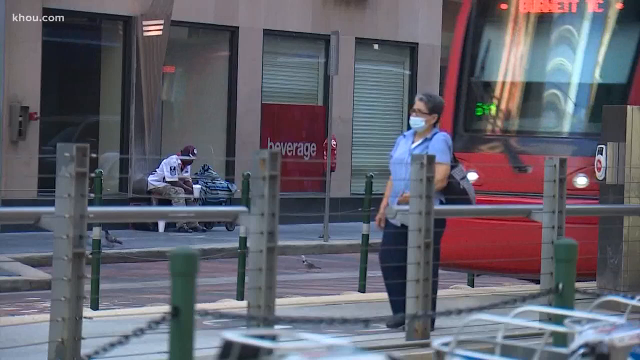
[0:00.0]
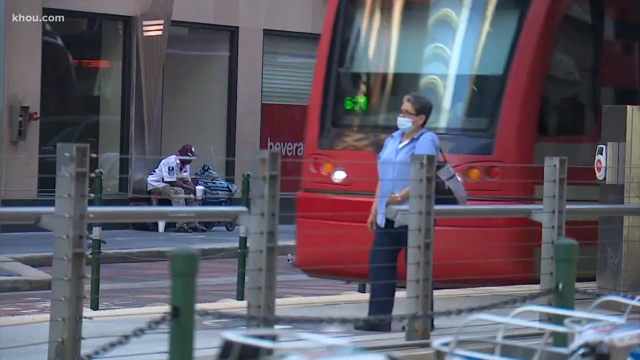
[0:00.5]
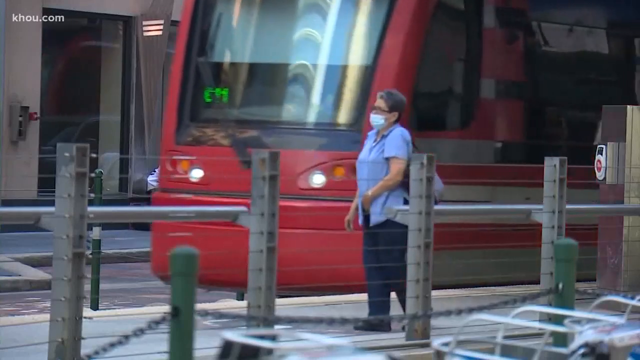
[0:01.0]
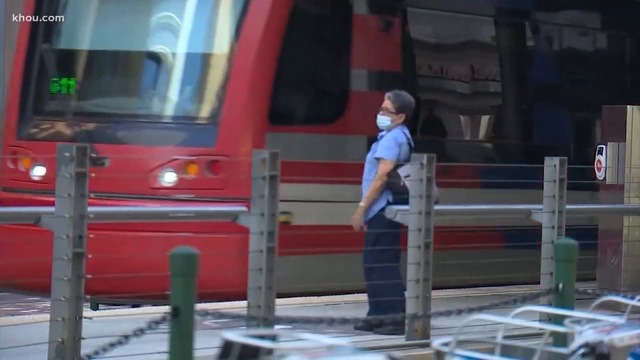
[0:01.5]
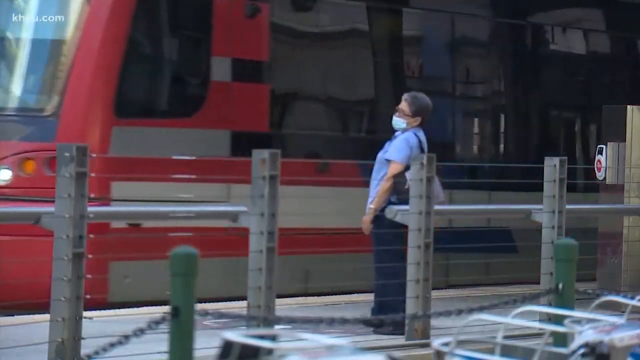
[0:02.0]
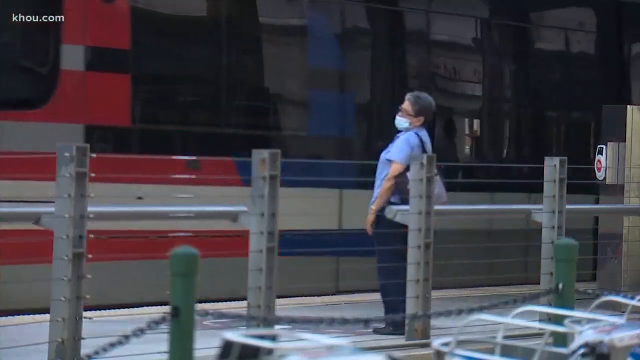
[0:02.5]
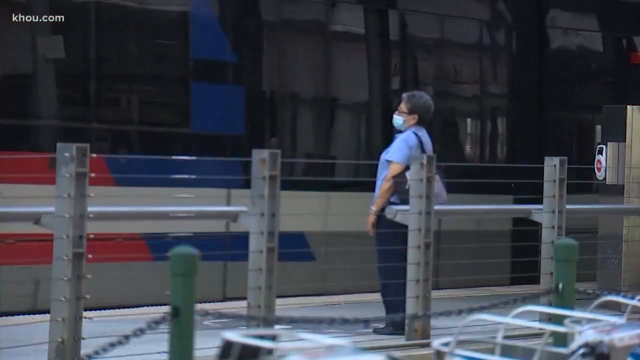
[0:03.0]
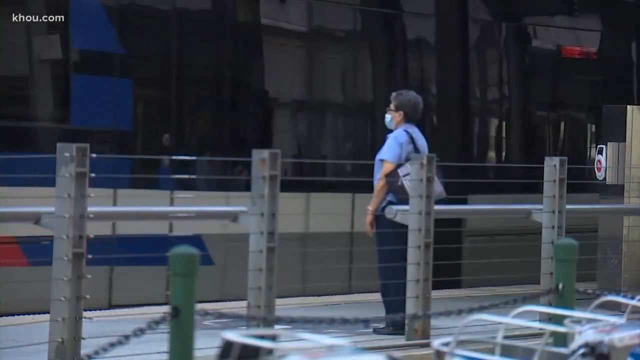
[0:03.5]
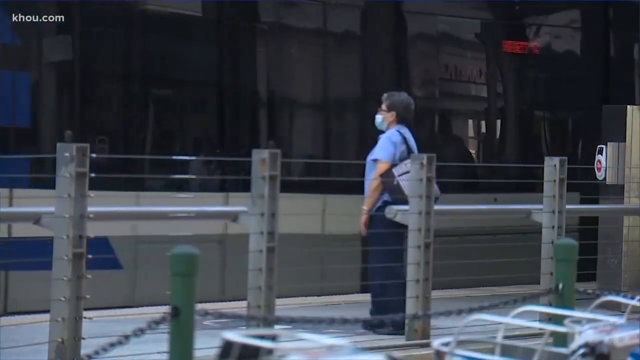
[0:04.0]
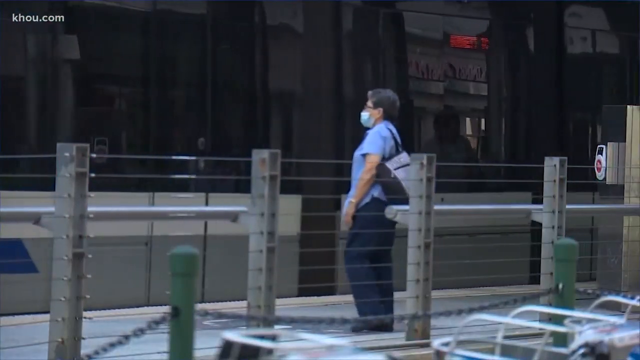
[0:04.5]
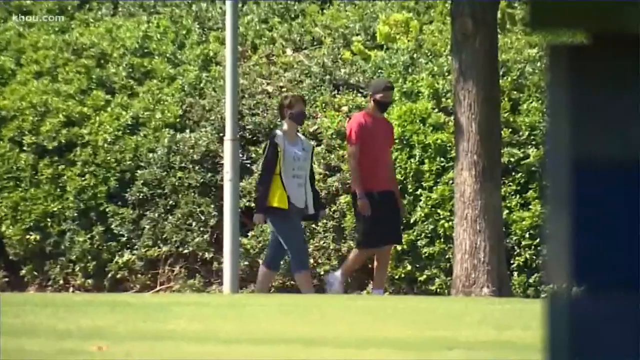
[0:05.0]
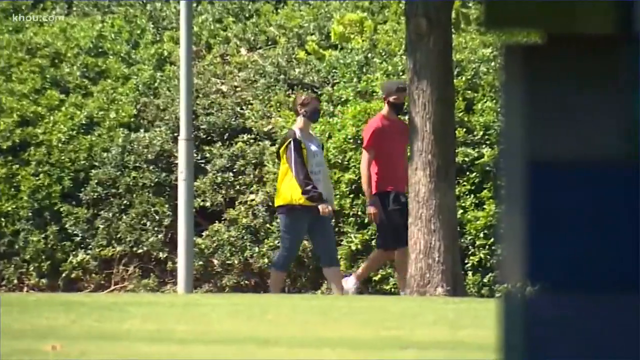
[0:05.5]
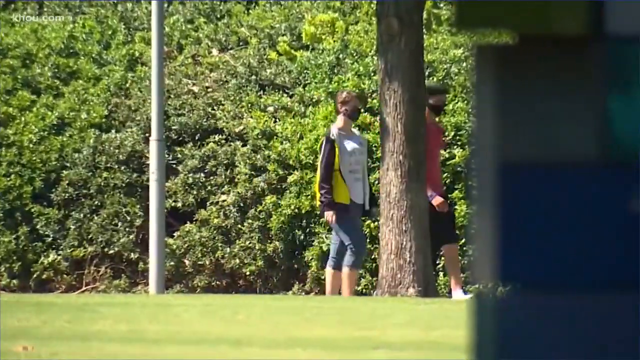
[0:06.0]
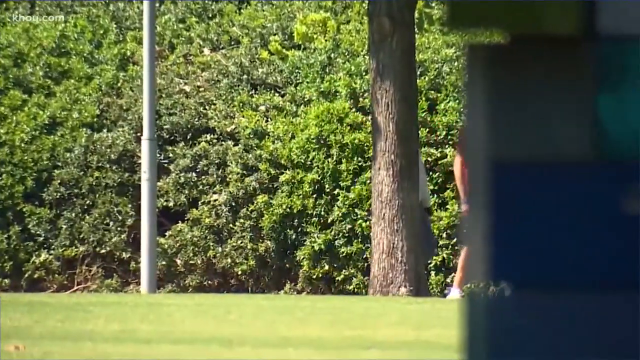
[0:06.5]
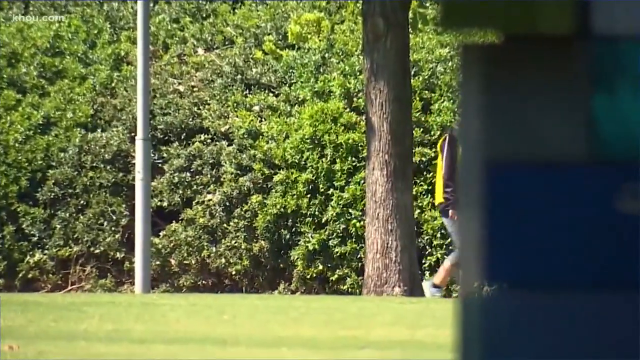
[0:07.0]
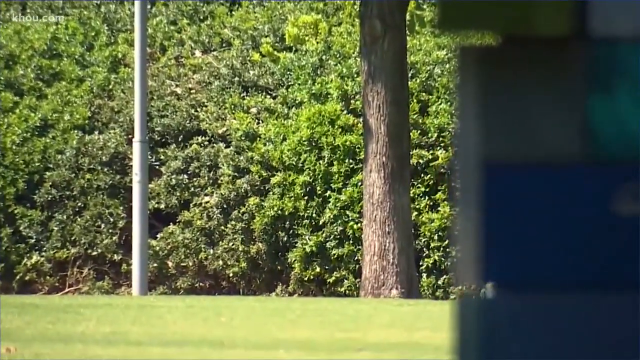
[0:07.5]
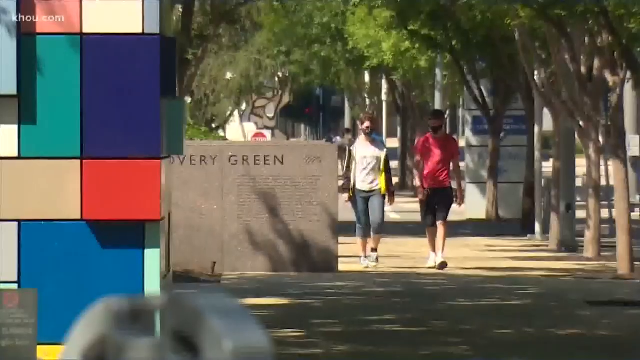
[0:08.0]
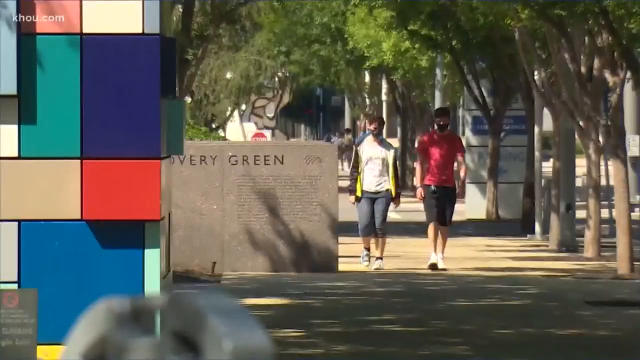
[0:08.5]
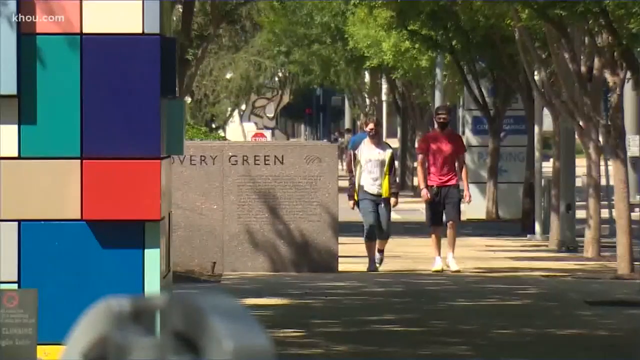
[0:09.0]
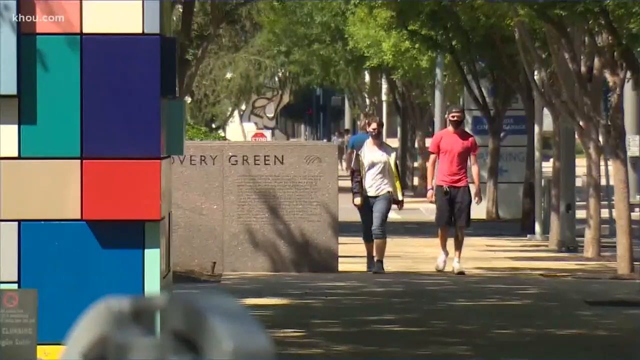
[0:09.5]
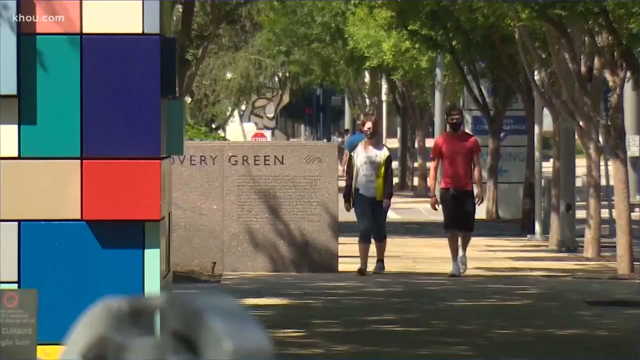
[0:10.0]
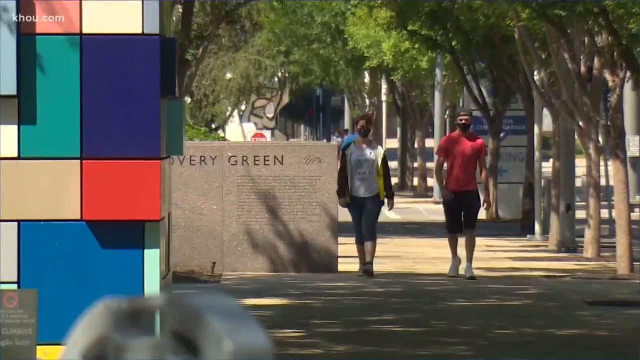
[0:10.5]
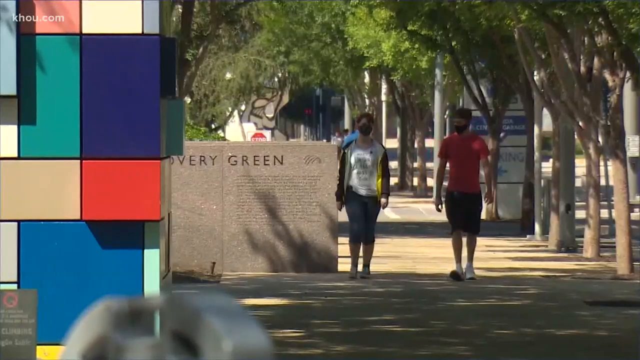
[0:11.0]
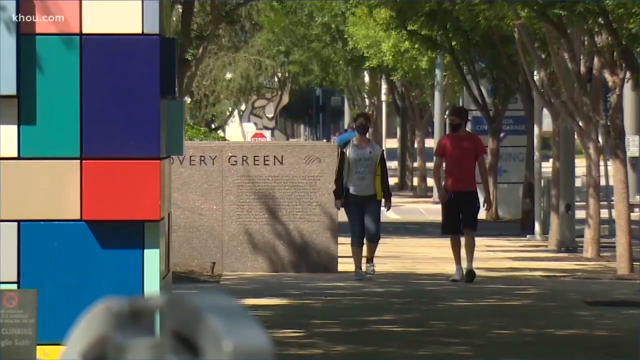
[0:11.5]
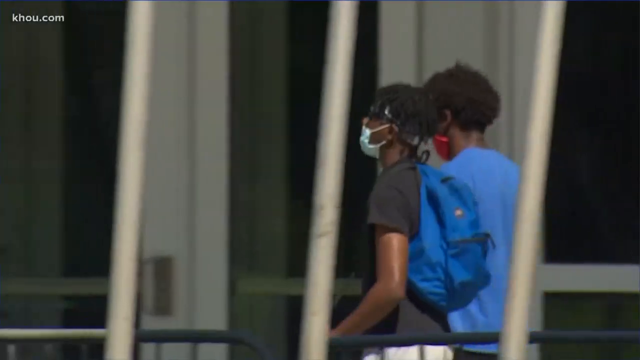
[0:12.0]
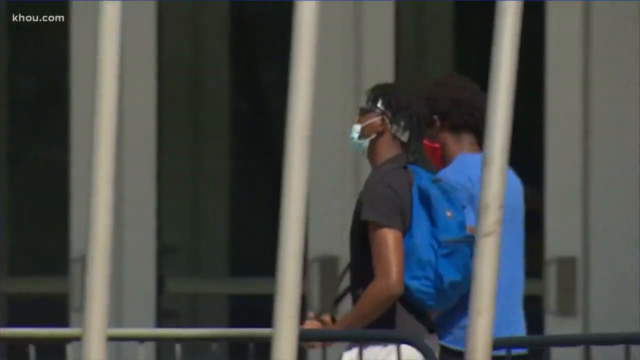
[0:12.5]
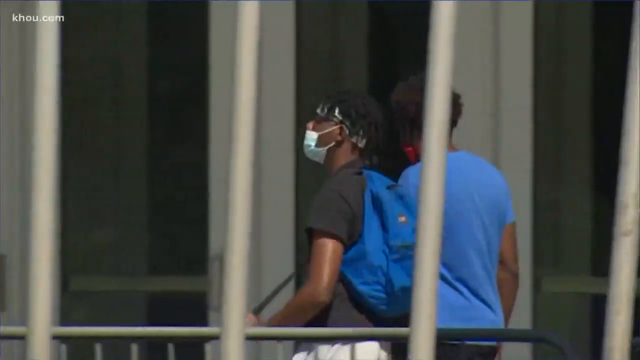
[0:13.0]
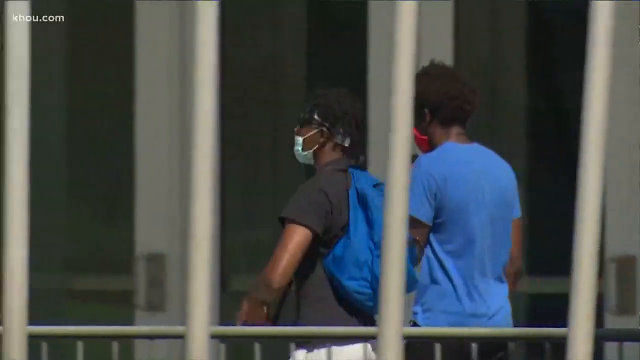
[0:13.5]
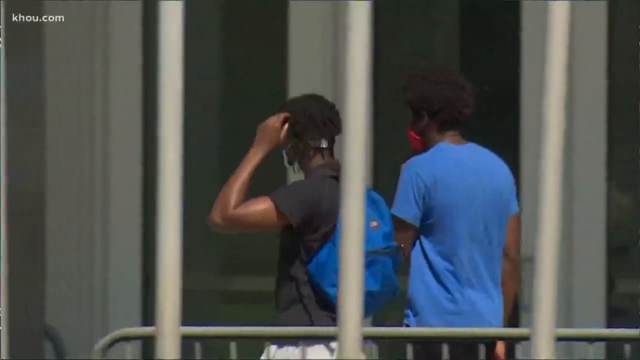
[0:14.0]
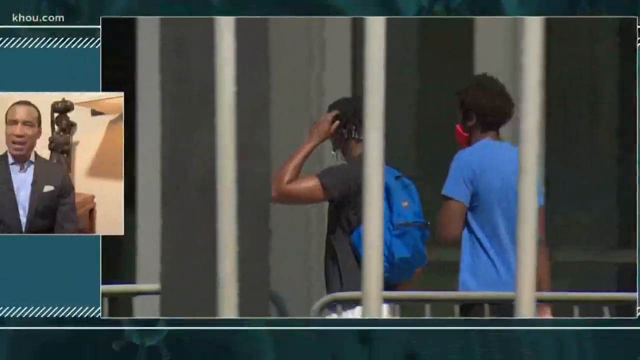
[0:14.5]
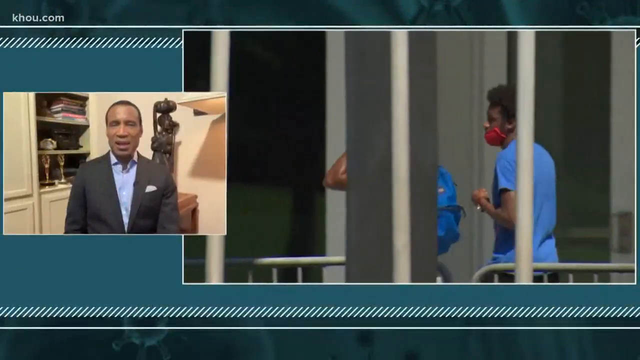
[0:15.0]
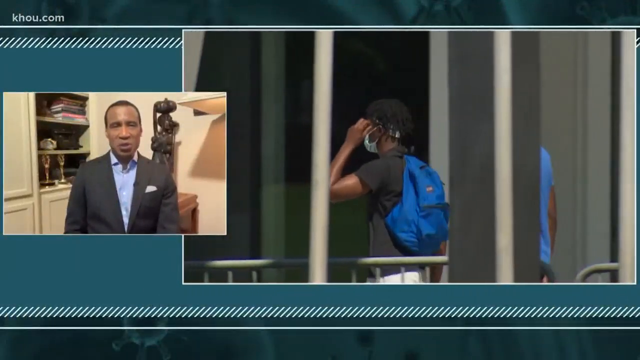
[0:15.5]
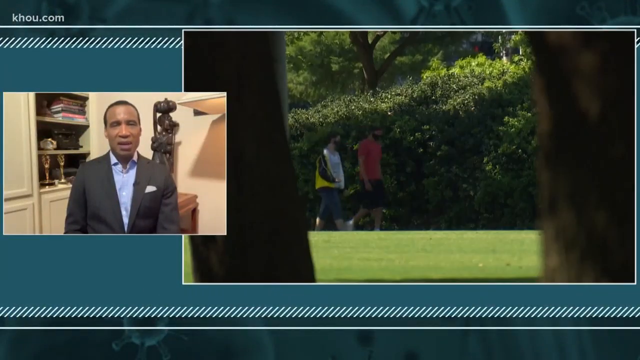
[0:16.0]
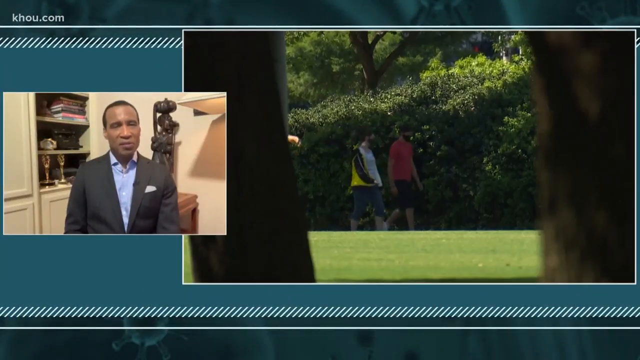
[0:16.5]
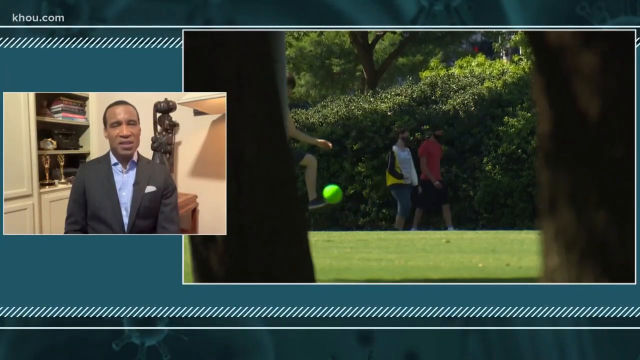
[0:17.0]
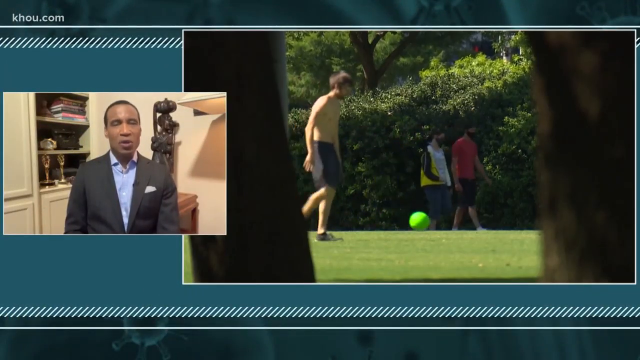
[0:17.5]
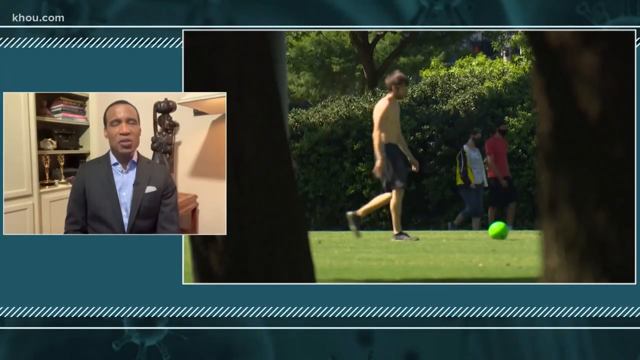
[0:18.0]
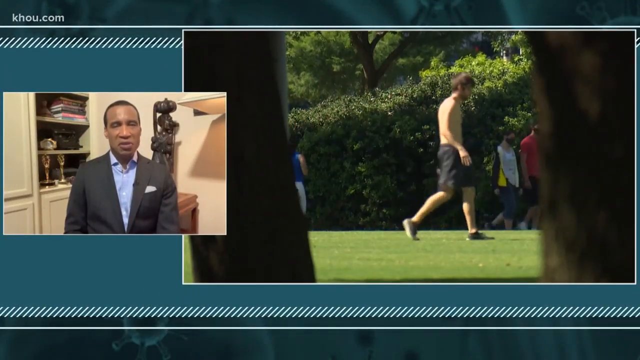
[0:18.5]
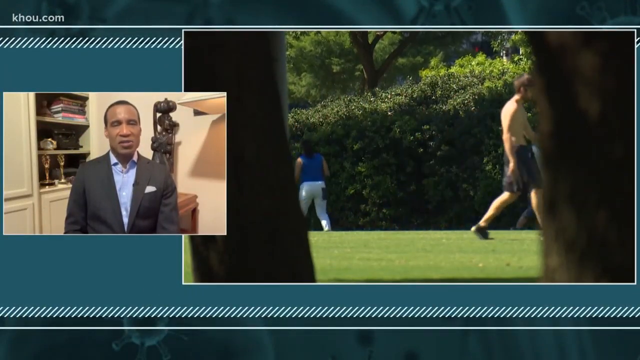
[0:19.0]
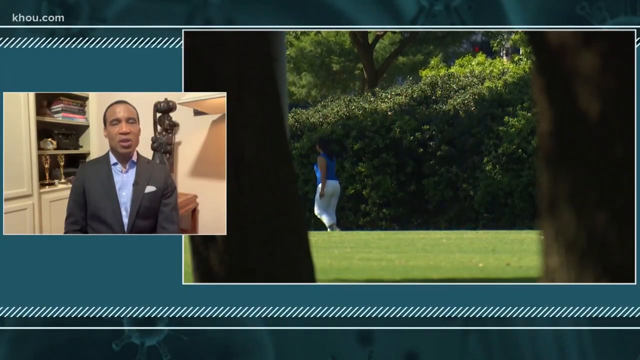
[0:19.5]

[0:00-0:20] In a town or city, a red tram takes up the majority of the screen. It is on a road of some sort, and next to the tram is a woman wearing a blue shirt, blue jeans and a mask. In the background there is a shop front, and in front of the shop a man is sat down with a large bag. The woman leans back and looks at the tram, and the tram then makes a stop. Next, a woman and a man, both wearing masks, walk through a park with lots of greenery, shrubs and a tree. The scene then moves to more of a town centre, where an art installation with red and blue blocks is on the left-hand side, with a plaque next to it, and two men walk towards the camera, one wearing red and one wearing white. A zoomed-out shot follows of two different men walking on what looks like a university campus. A new shot then shows a man on the left-hand side speaking at the camera as though he is being interviewed; the bigger picture goes slightly smaller to make room for his picture on the left, and on the right a man plays with a football in a park.